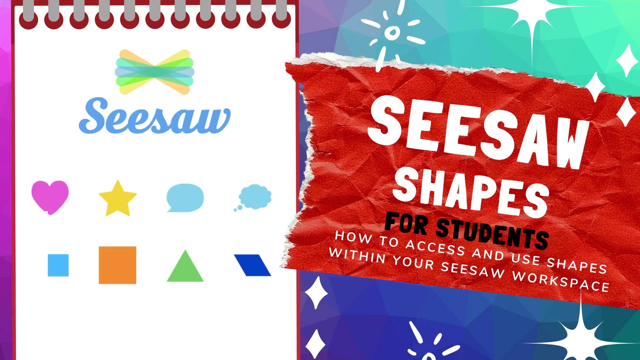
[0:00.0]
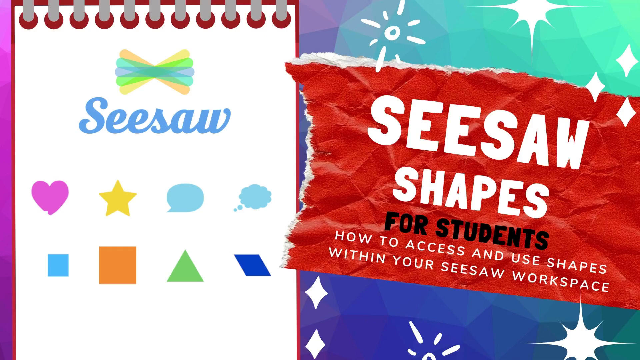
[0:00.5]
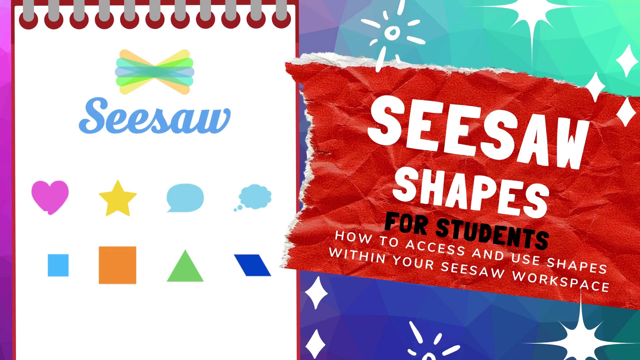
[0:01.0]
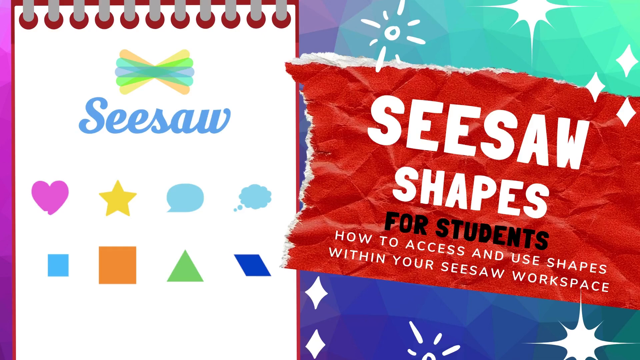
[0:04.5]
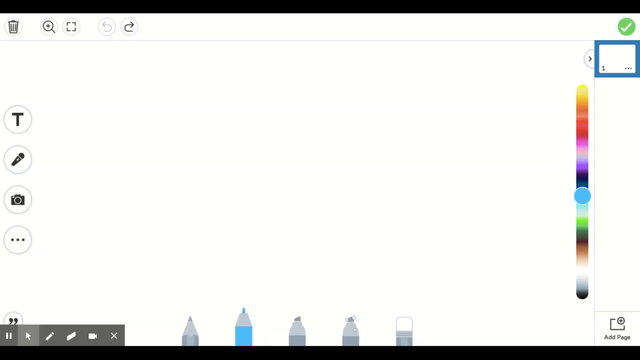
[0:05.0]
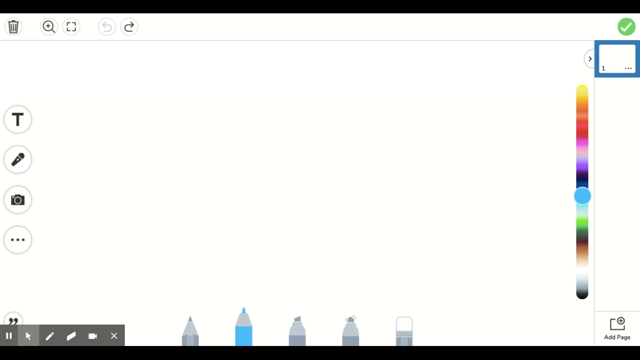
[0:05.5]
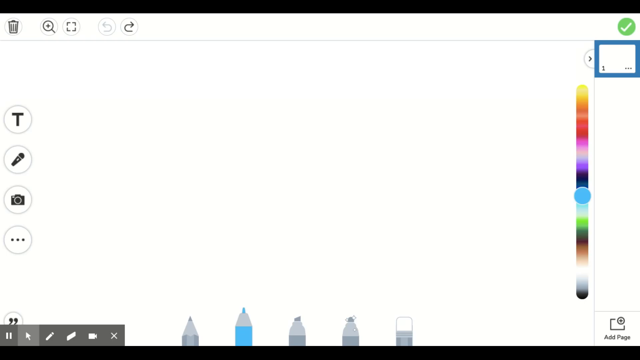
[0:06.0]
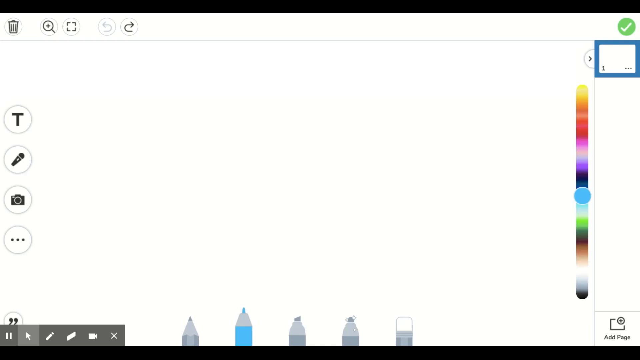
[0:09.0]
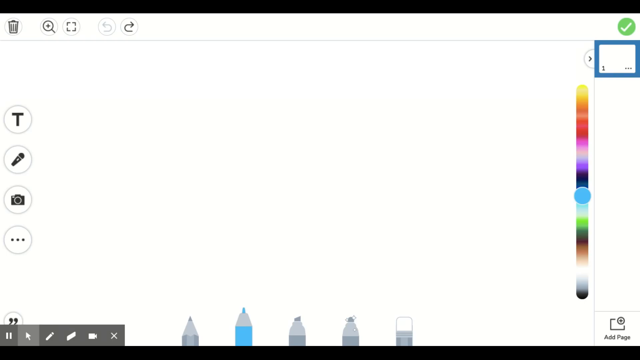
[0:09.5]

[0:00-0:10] The video opens on an animated notebook on the left half of the screen with the title "Seesaw" and a number of shapes and other objects of various colors. On the right is a scrap piece of paper that says "Seesaw Shapes for Students", and under that is a small title stating "how to access and use shapes within your Seesaw workspace". The view then changes to what looks like a whiteboard or drawing tool with a number of options, including text, microphone and camera on the left, different types of writing utensils on the bottom, and a color scale on the right.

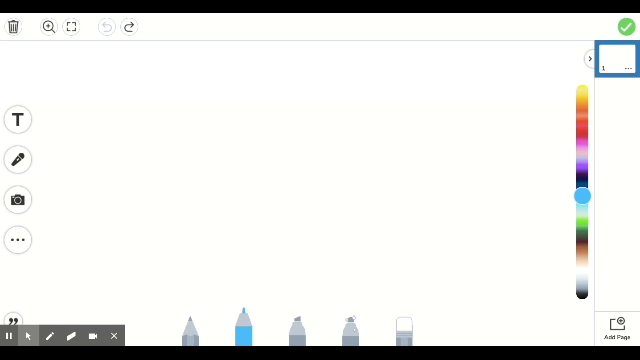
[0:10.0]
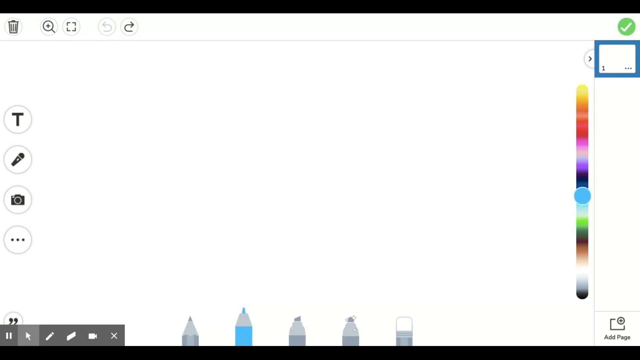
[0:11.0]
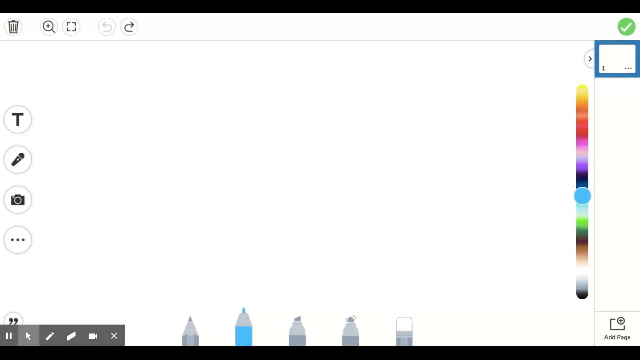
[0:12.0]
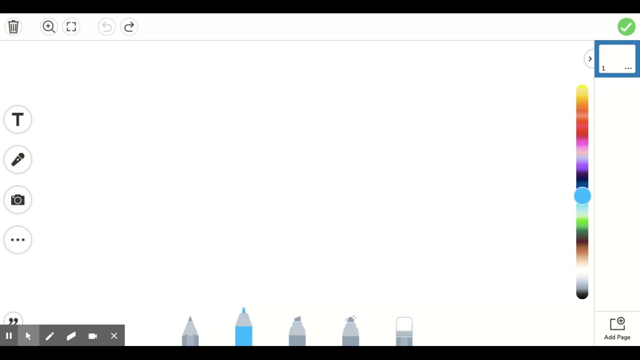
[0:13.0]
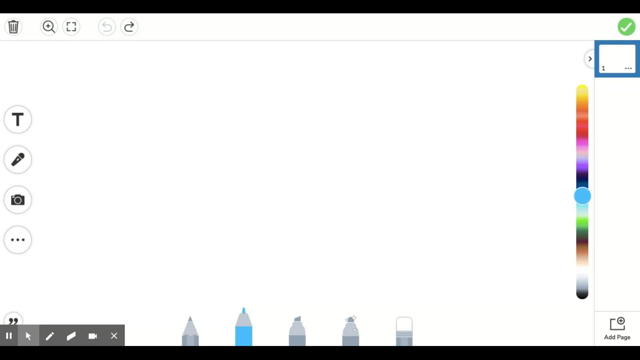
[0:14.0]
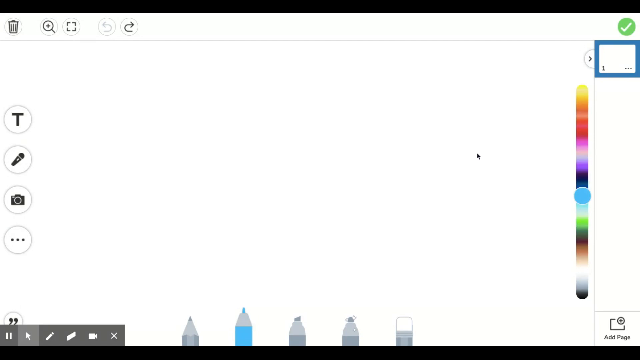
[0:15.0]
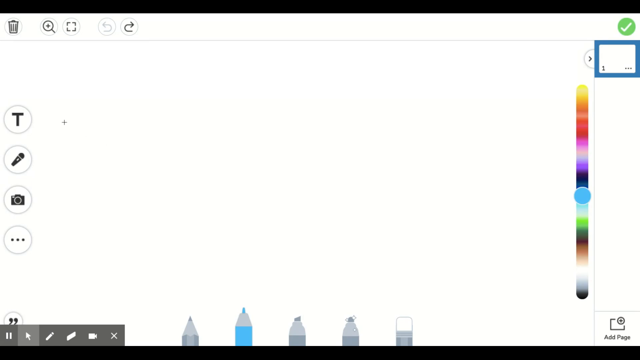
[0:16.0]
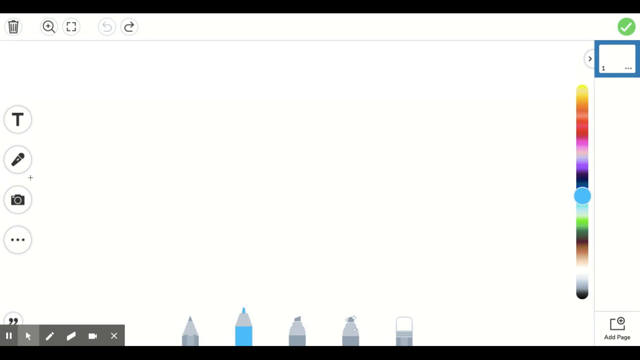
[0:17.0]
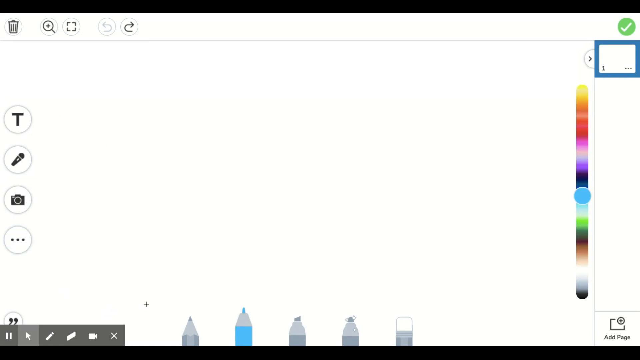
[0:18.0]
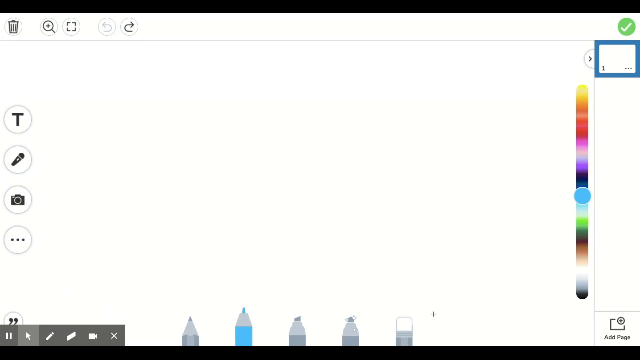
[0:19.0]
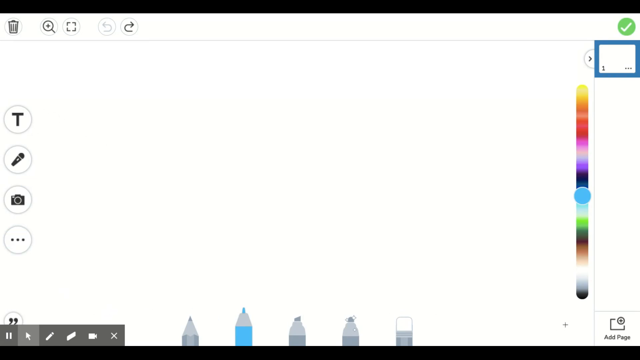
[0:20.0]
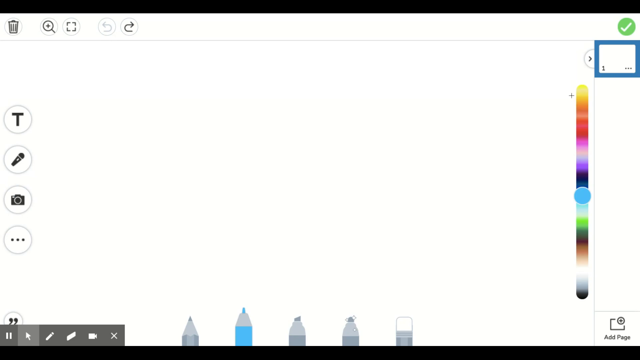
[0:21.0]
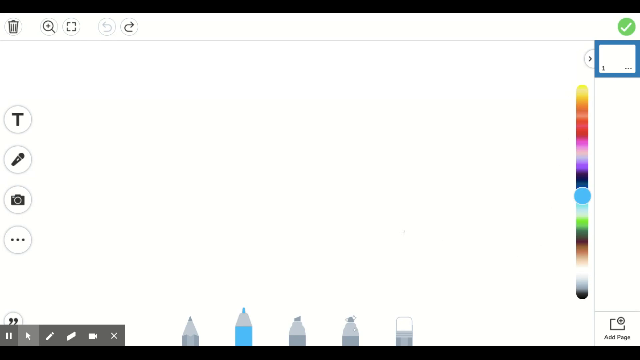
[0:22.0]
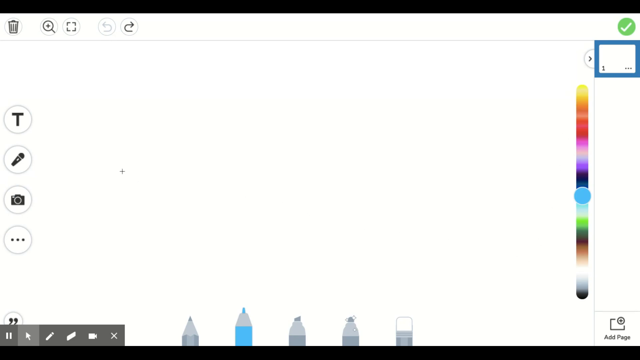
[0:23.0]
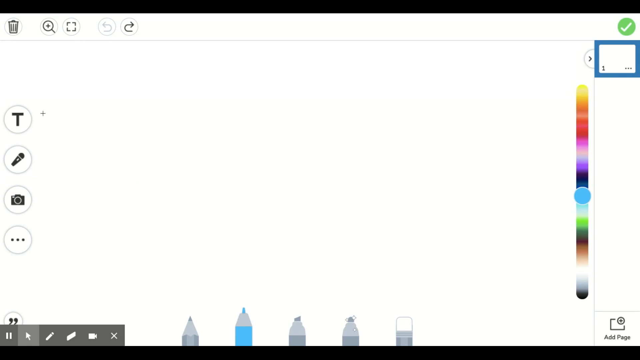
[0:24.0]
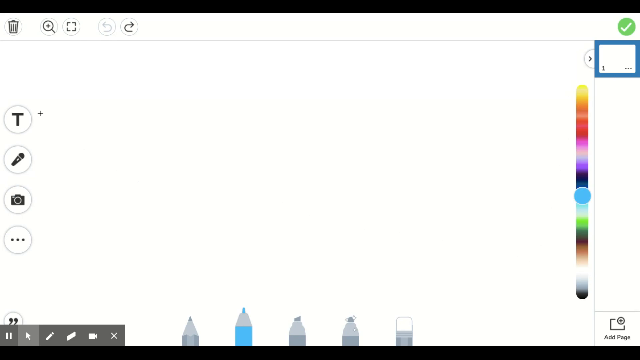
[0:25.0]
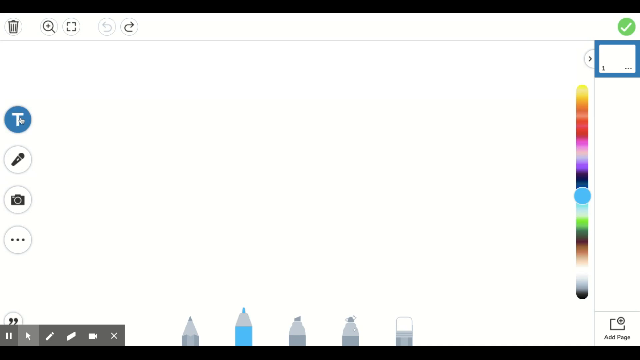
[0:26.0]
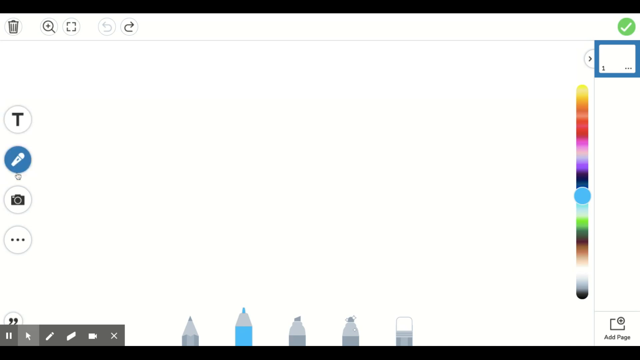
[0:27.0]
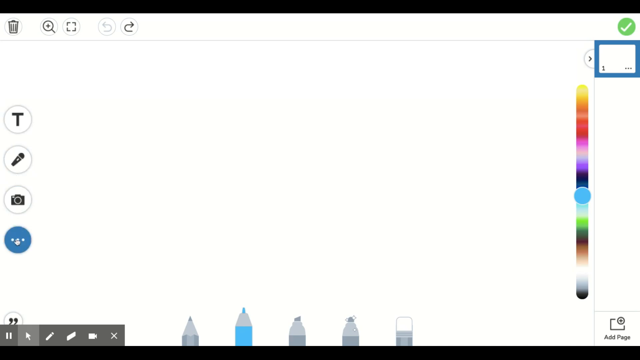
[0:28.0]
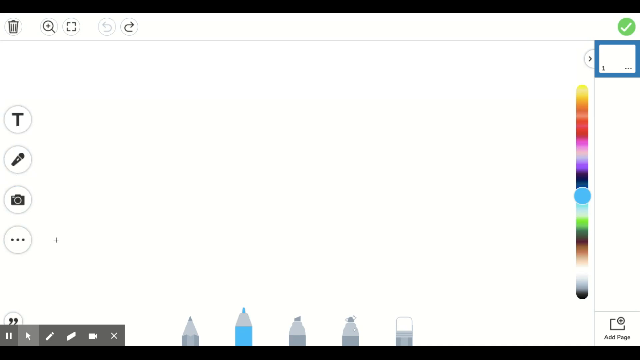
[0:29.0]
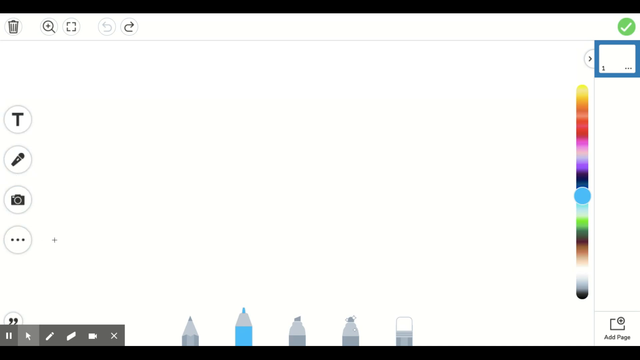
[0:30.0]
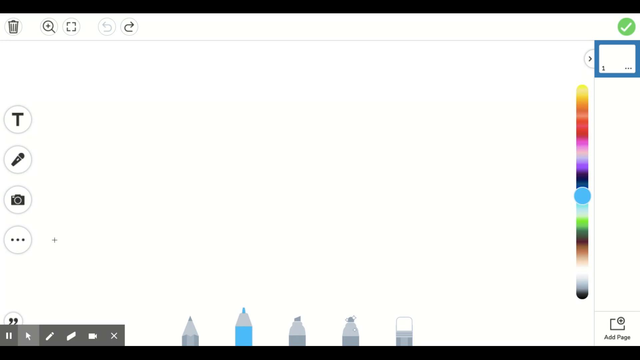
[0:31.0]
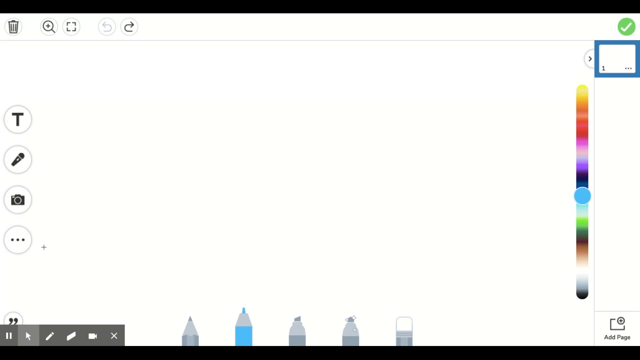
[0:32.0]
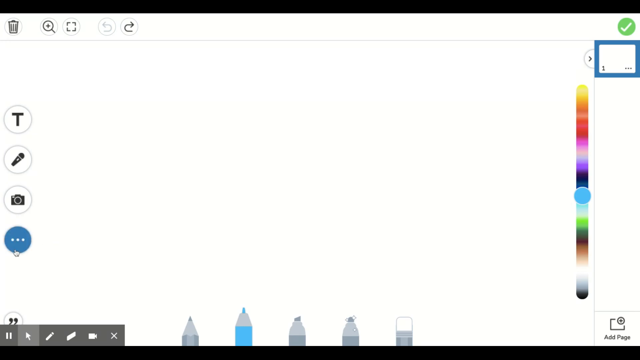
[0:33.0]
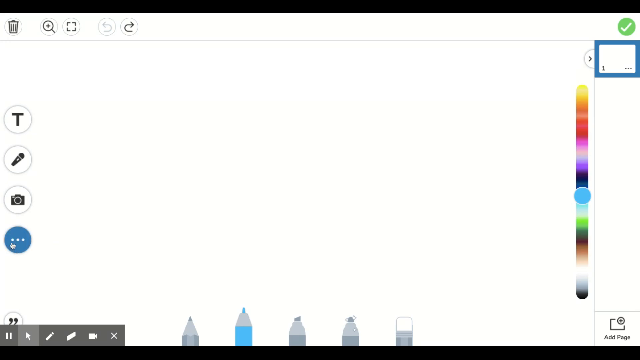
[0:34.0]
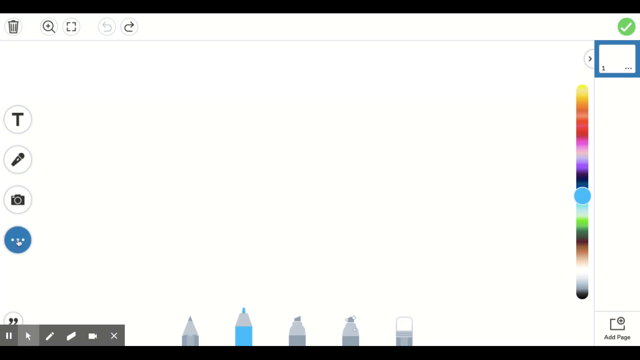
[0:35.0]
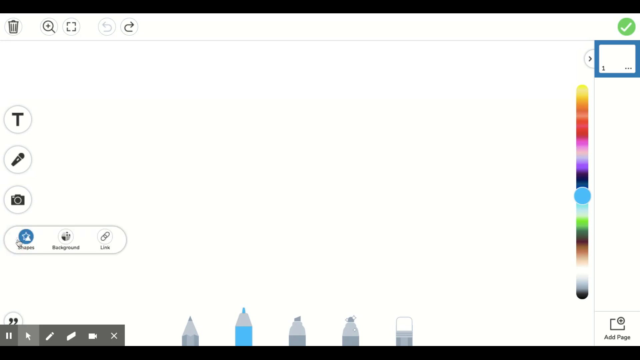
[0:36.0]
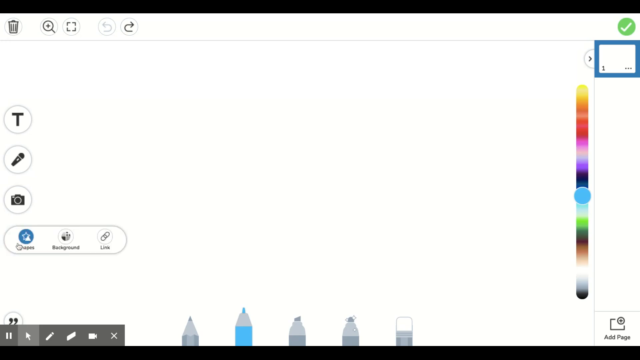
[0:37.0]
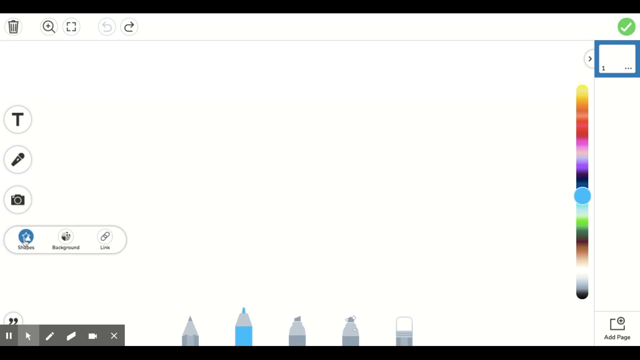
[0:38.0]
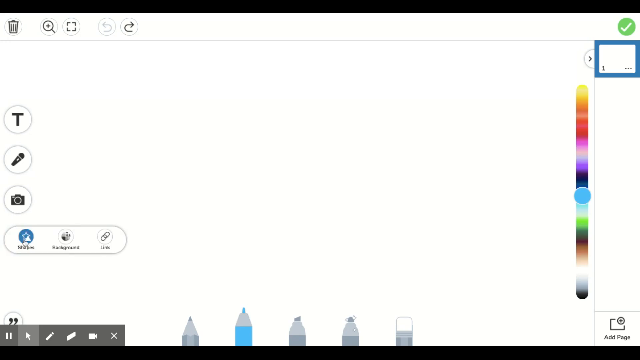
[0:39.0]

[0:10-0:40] A whiteboard or drawing space has color options on the right, various drawing tools and sizes at the bottom, and options including a microphone and camera on the left. At the top right is a green checkmark, and at the bottom right is an "Add page" button. The middle is entirely white and blank. The user moves the cursor over and highlights a number of options, including the colors and the drawing utensils along the bottom, never staying on any for long. The user then highlights the options on the left more slowly, including a T, a microphone, a camera and three horizontal dots. Clicking the three horizontal dots expands them into a horizontal menu showing three options, each with a small grey icon and text underneath, with a grey oval outline encircling all three. The user hovers over the first option.